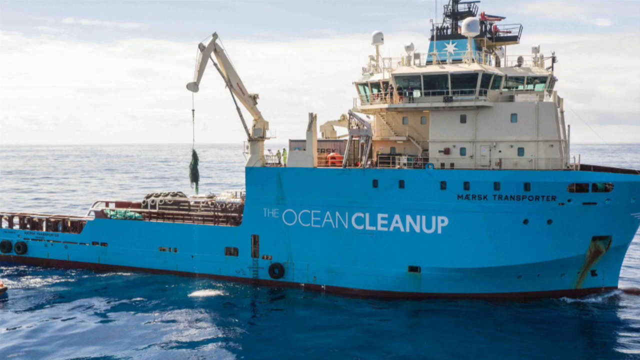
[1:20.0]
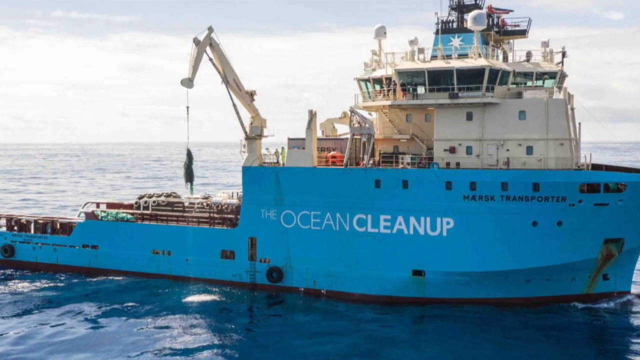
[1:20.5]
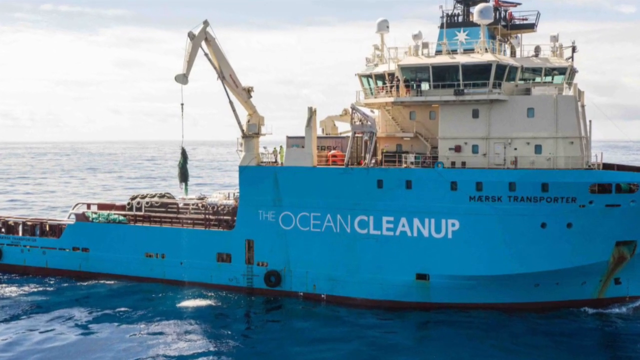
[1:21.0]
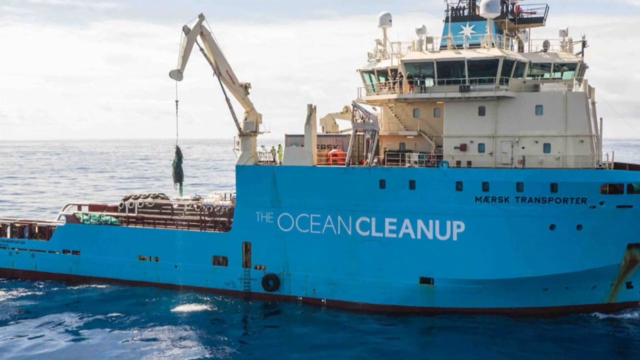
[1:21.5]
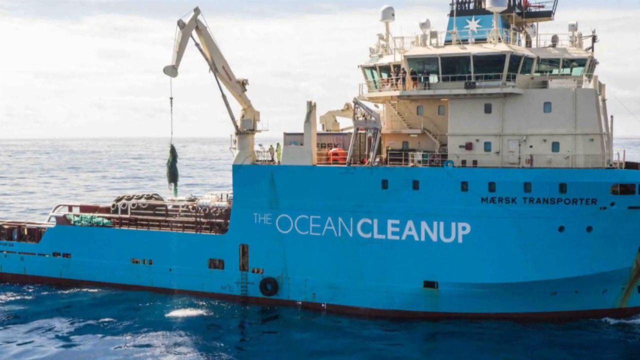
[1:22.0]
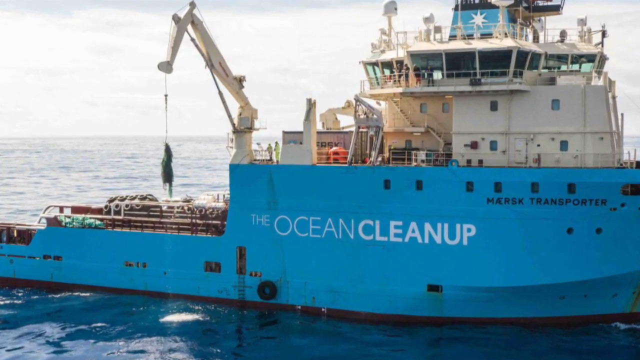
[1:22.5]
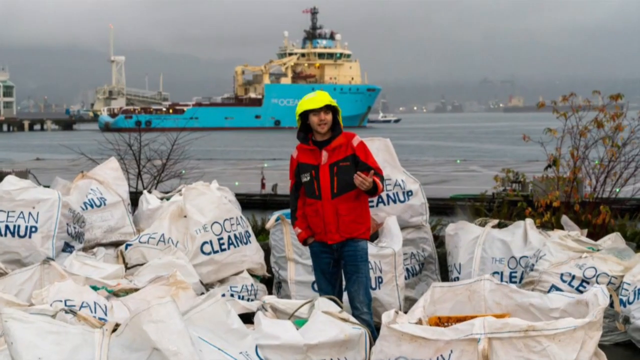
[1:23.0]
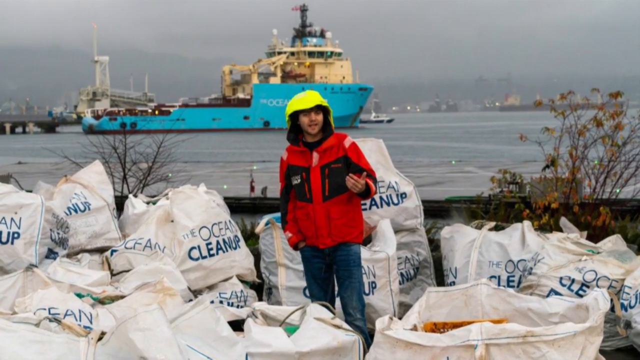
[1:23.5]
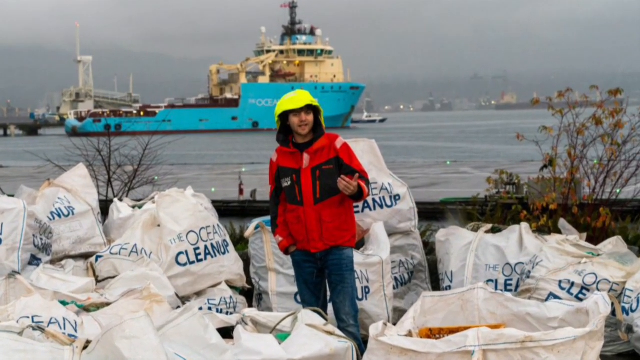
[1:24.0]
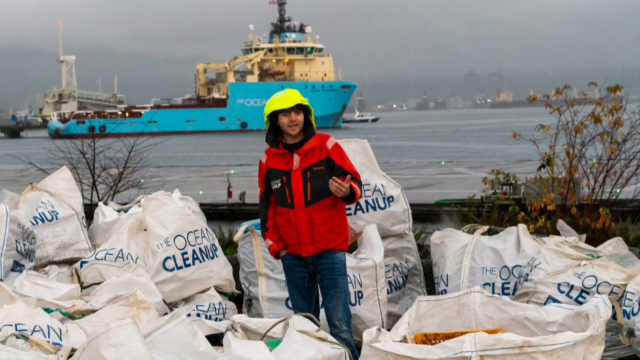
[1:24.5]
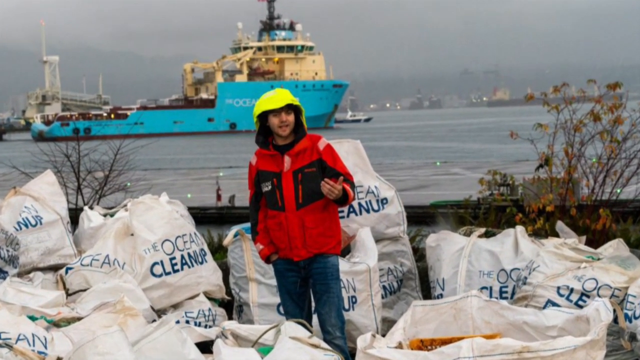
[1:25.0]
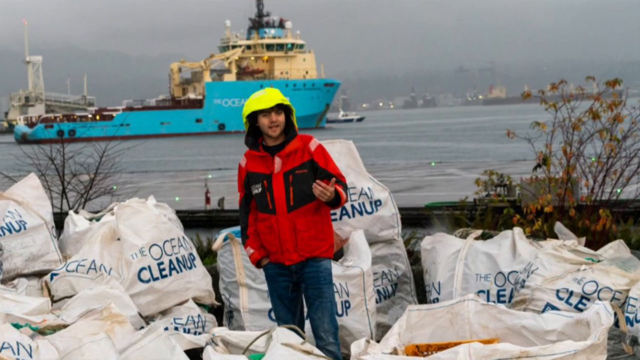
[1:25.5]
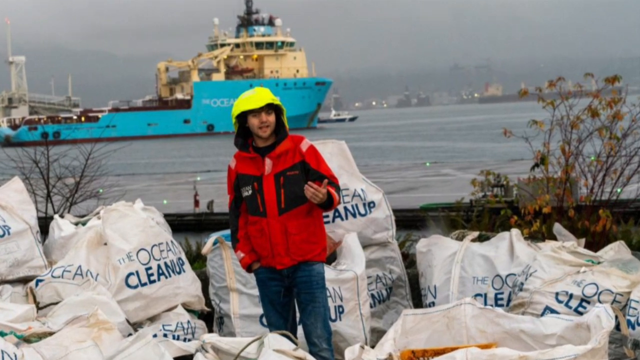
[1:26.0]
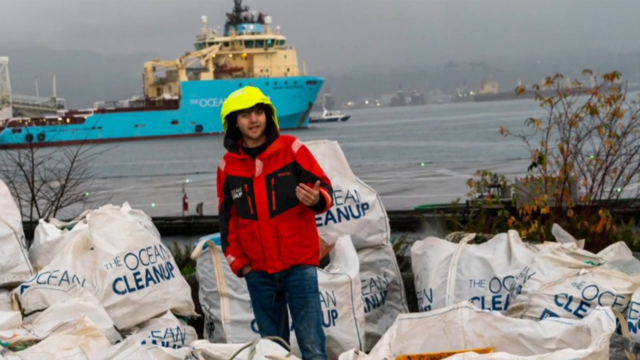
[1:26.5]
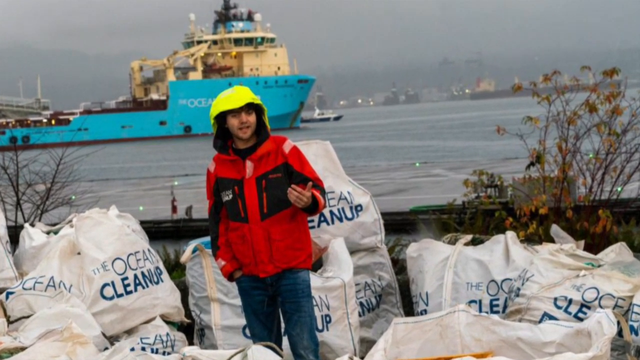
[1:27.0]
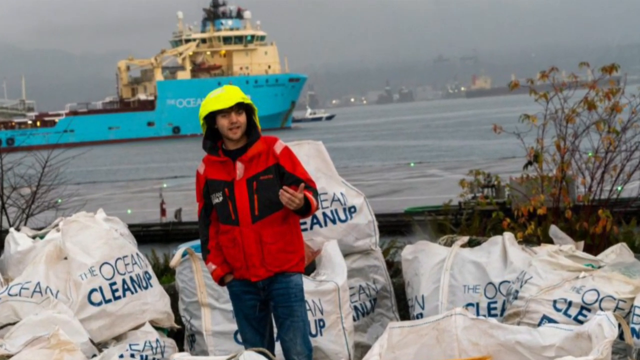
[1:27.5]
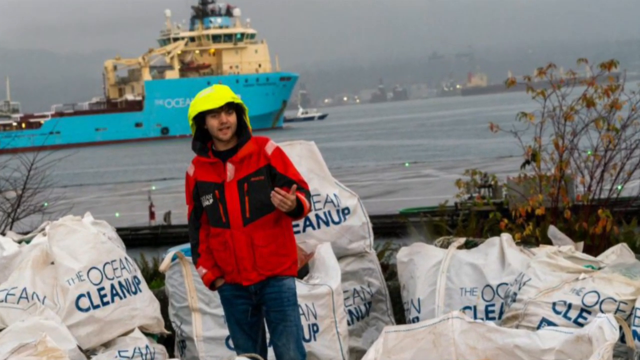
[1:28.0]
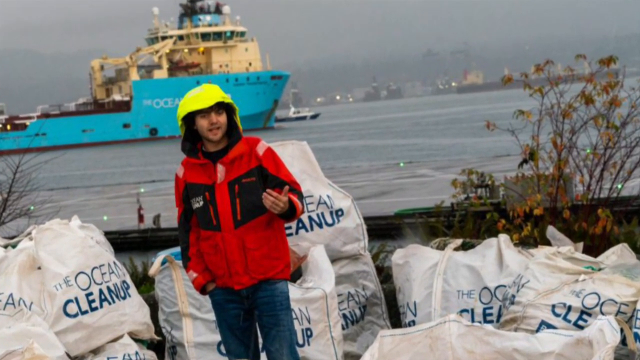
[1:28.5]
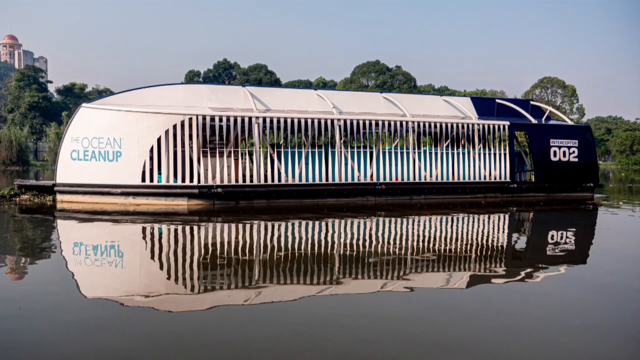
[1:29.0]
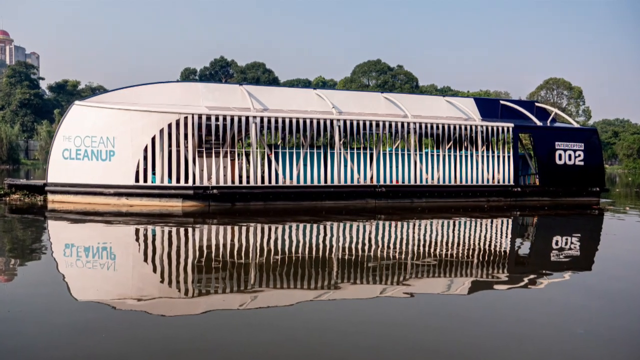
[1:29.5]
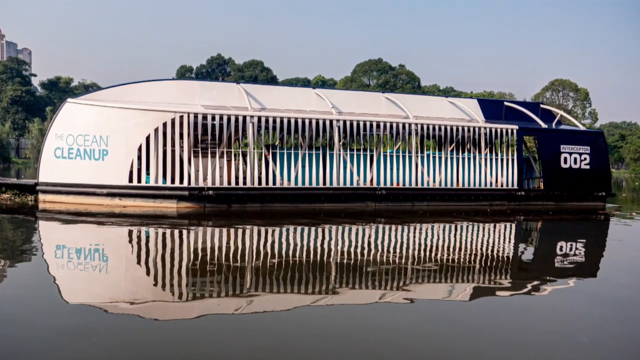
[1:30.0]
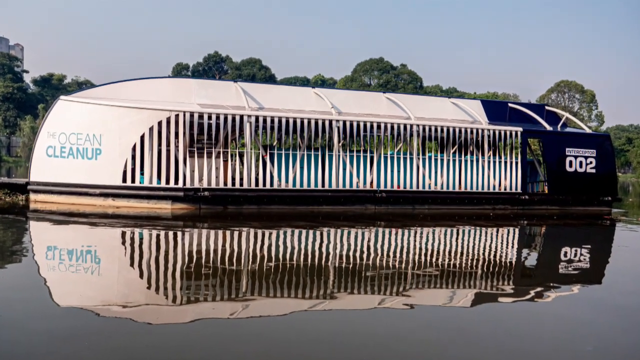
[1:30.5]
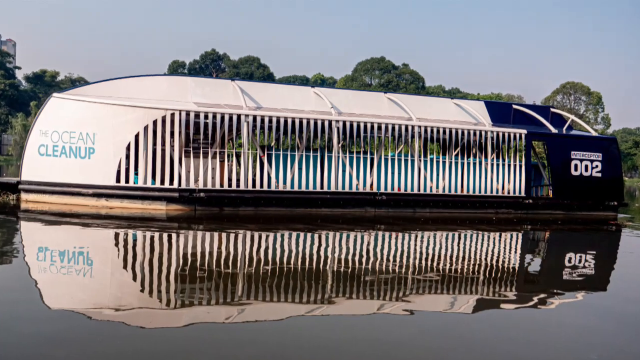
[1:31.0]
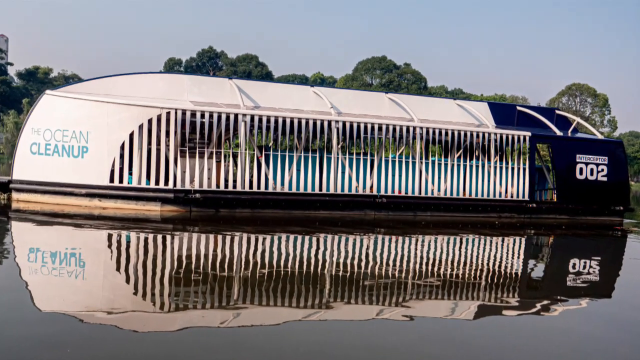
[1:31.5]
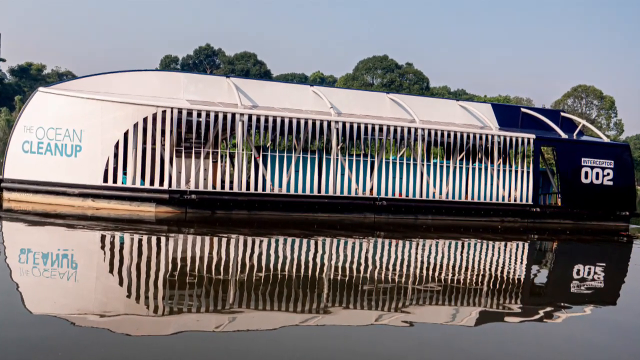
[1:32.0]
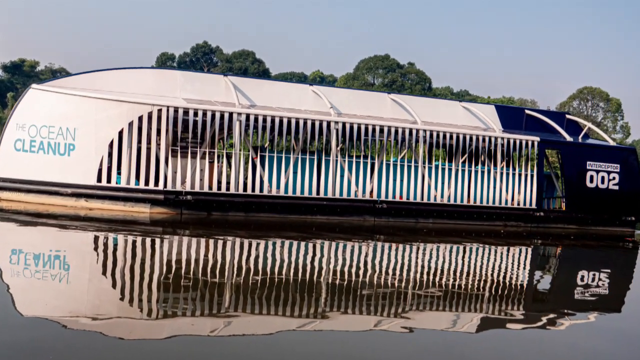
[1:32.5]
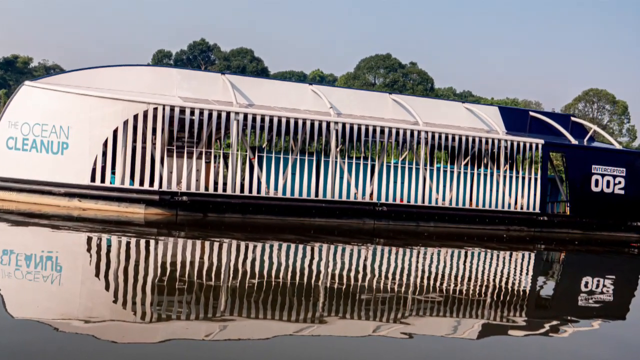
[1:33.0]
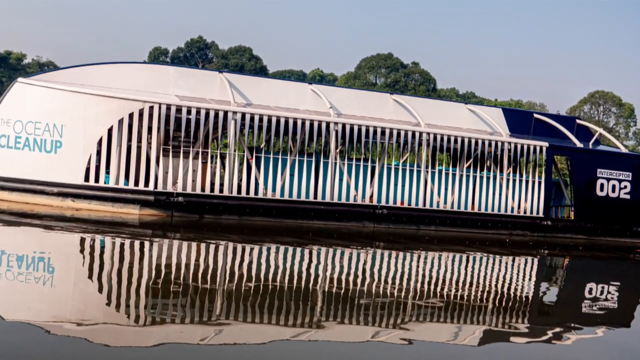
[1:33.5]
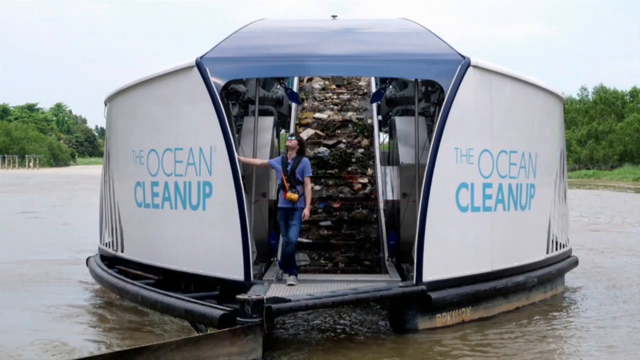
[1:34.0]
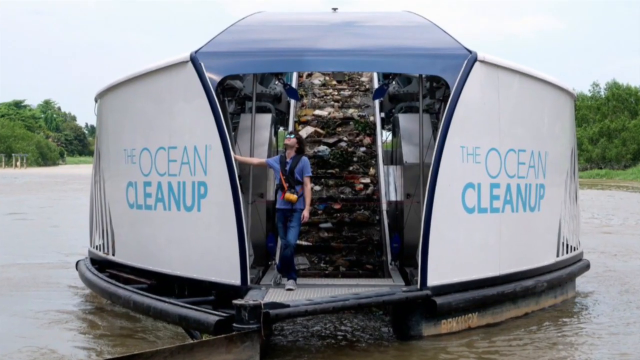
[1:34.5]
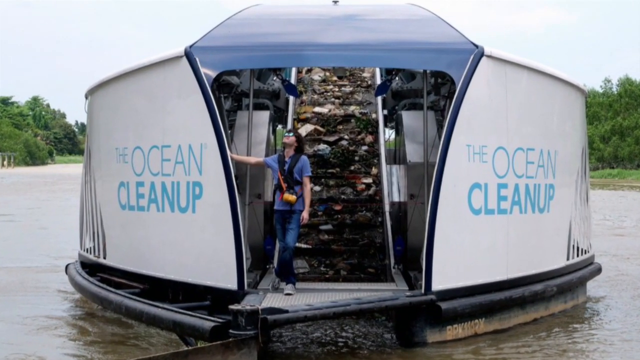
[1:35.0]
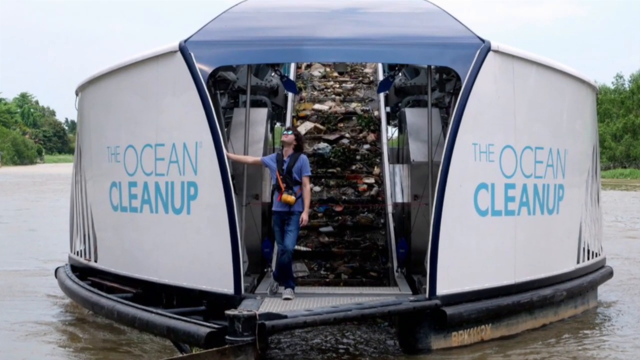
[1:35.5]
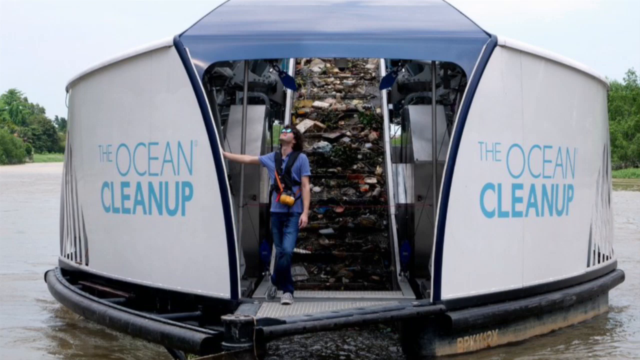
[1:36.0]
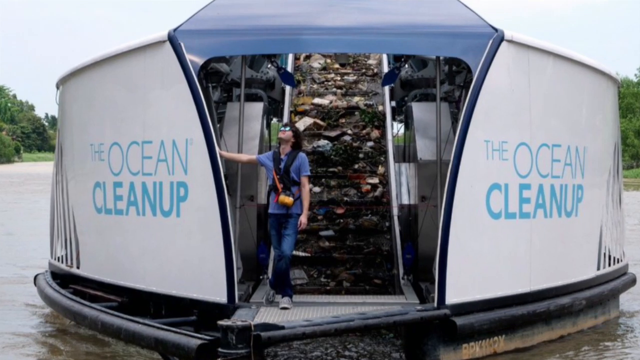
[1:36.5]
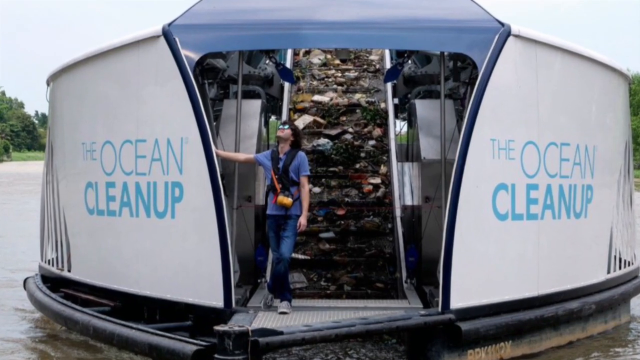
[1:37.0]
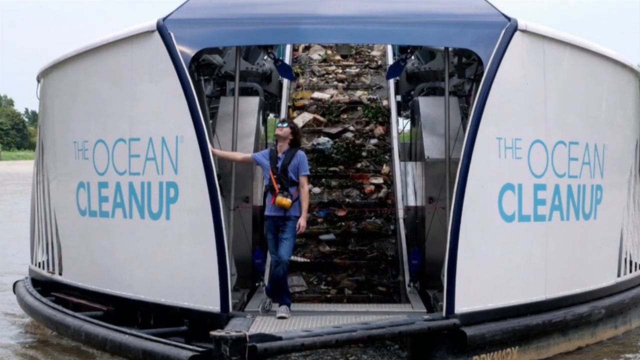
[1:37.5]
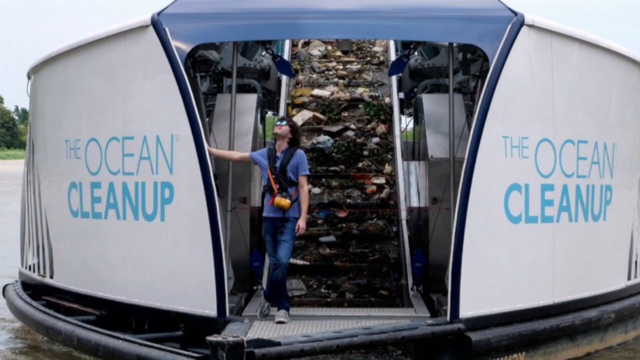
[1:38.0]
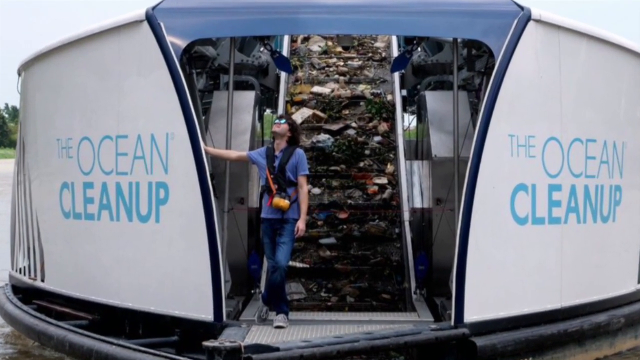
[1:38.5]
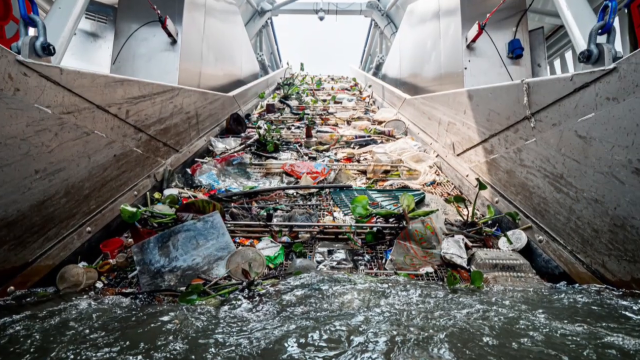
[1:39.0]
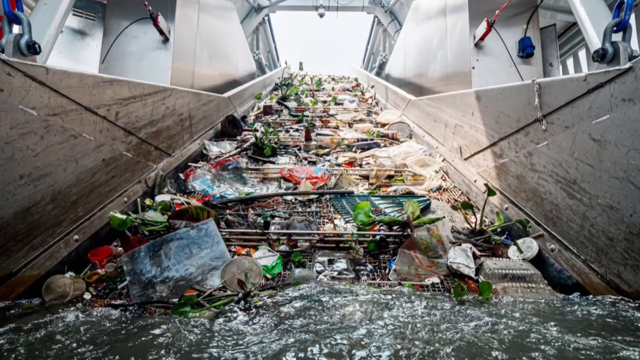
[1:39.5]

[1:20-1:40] A close-up shows the Ocean Cleanup tugboat, now sailing toward the right side of the screen through blue water, with waves crashing around the boat and forming white foam. In the background is a large body of ocean water with many waves, and a blue sky with lots of clouds, only a small portion of blue peeking through. Next, an ocean cleanup worker is surrounded by numerous white bags with the words "ocean cleanup" written on them in turquoise; the bags are filled with debris from the ocean. The worker wears a red, black and white jacket, a yellow hoodie with the hood over his head, and blue denim jeans. His right hand is in his pocket, and his left hand is bent at the elbow, palm up, with the fingers slightly pulled in toward his body. He looks like he is looking off into the distance, most likely at someone recording. Another ocean cleanup boat appears, more modern looking: white in the front, with lots of white columns in the middle and a navy blue back end with the number "002" written in white. A different view shows the back end of this boat filled with ocean debris from the floor to the ceiling, seen through an opening in the middle of the boat. On either side of the opening, "the ocean cleanup" is written in turquoise. An ocean cleanup worker stands in this area with brown hair, sunglasses, a short-sleeved periwinkle t-shirt, blue denim jeans and white tennis shoes, the left leg crossed over the right leg and slightly bent at the knee.